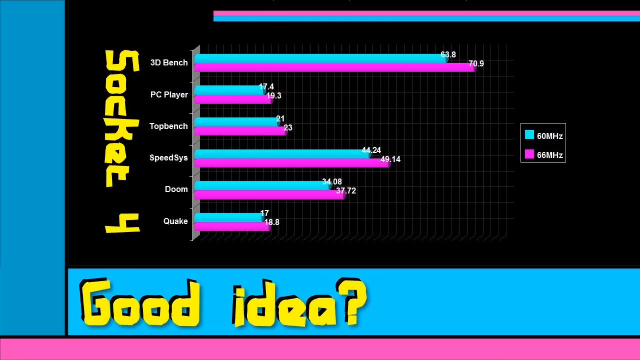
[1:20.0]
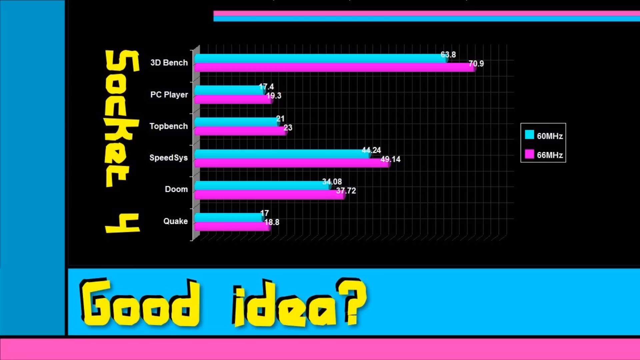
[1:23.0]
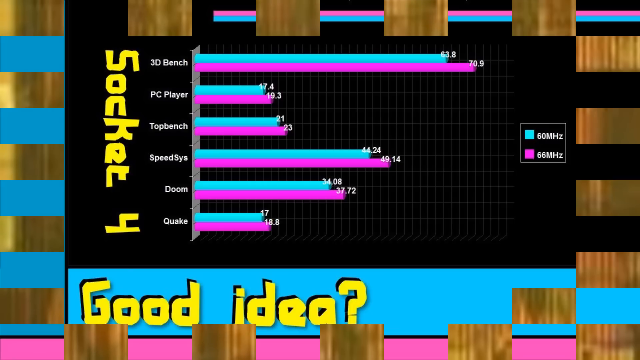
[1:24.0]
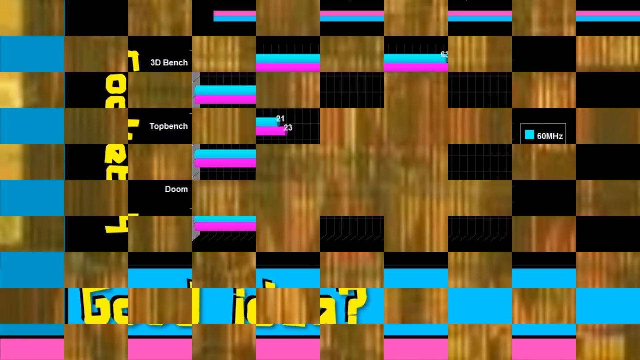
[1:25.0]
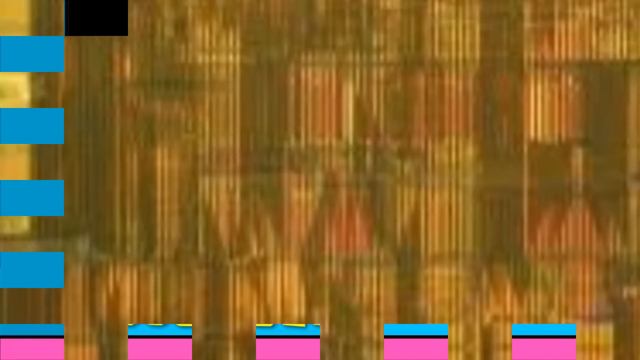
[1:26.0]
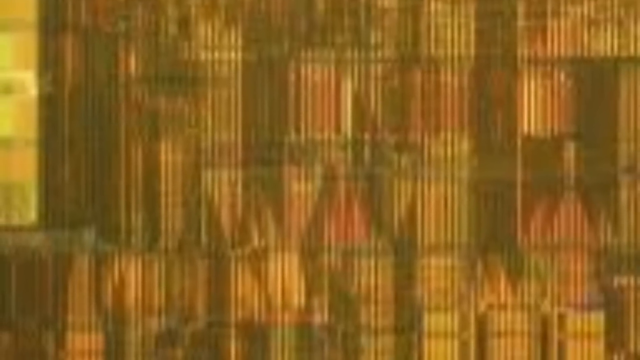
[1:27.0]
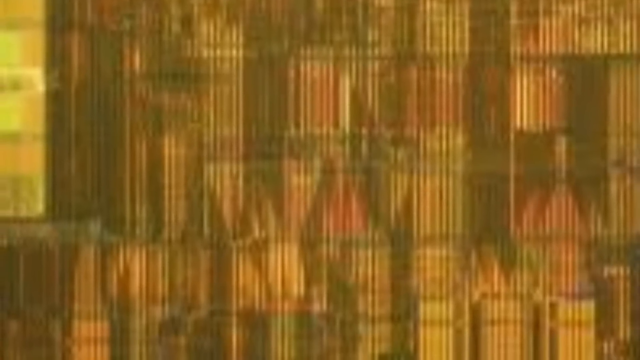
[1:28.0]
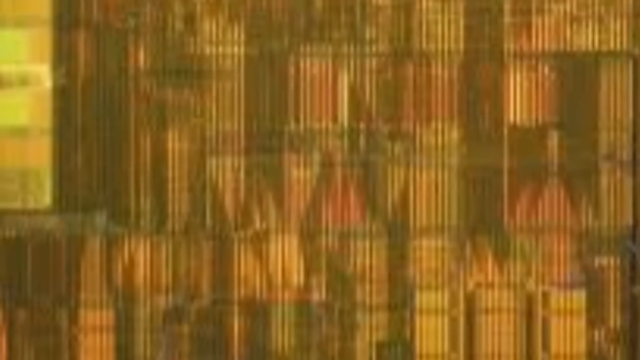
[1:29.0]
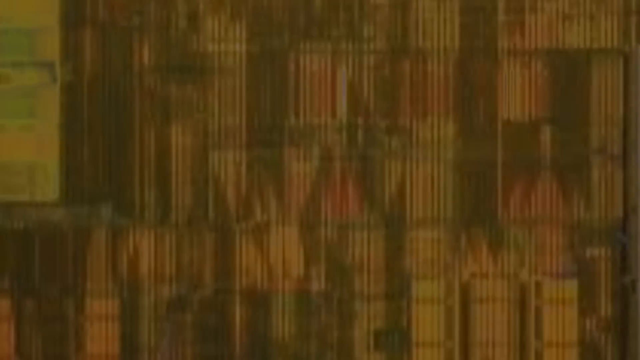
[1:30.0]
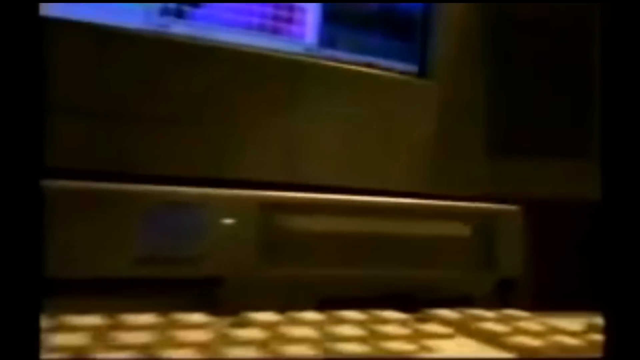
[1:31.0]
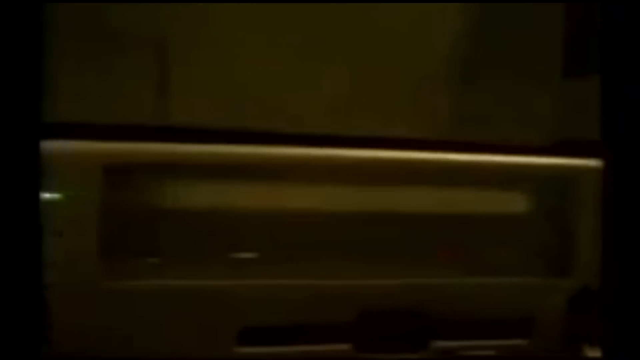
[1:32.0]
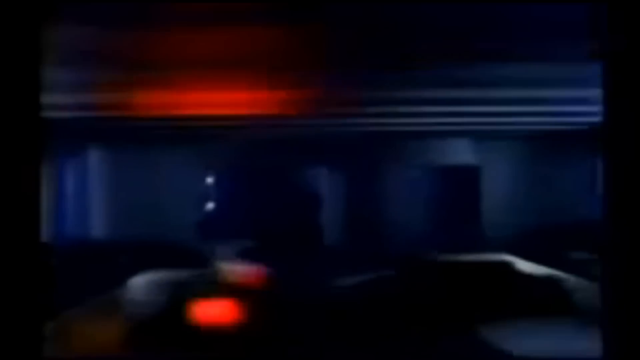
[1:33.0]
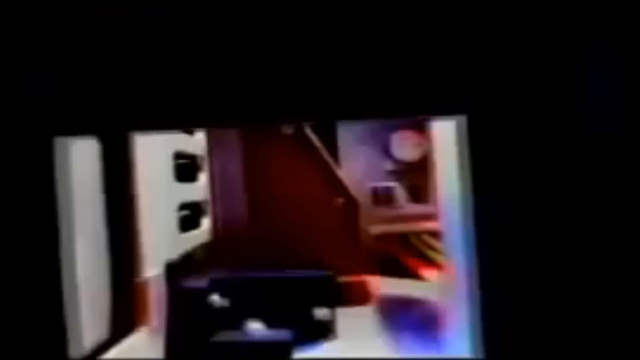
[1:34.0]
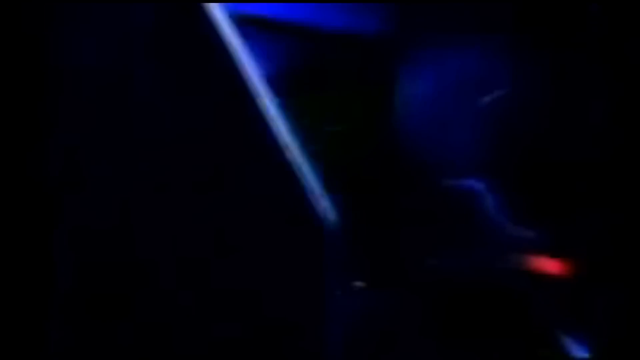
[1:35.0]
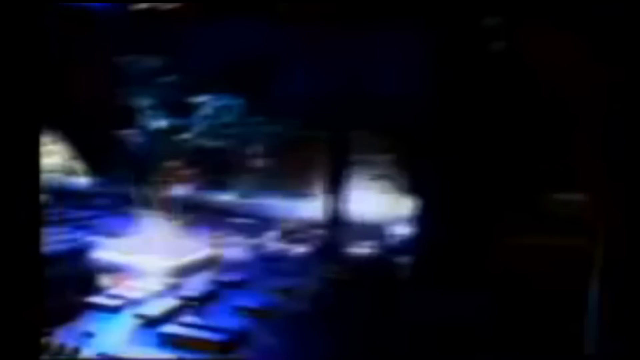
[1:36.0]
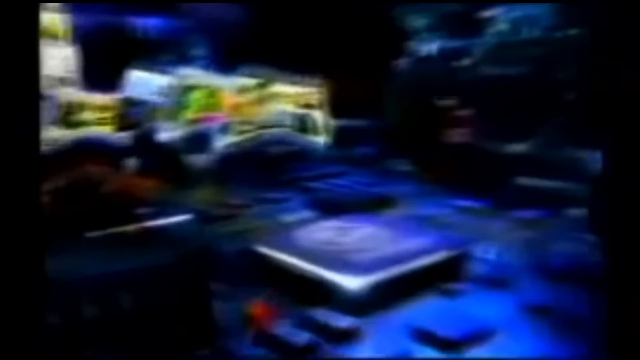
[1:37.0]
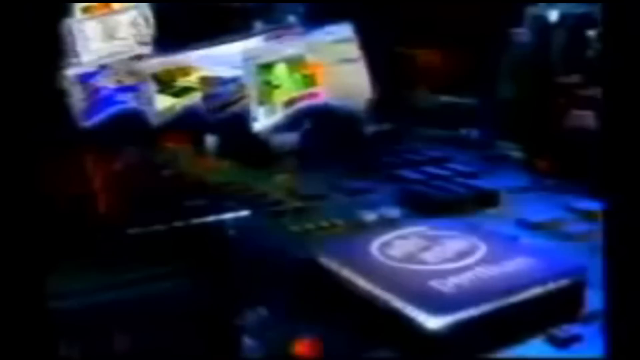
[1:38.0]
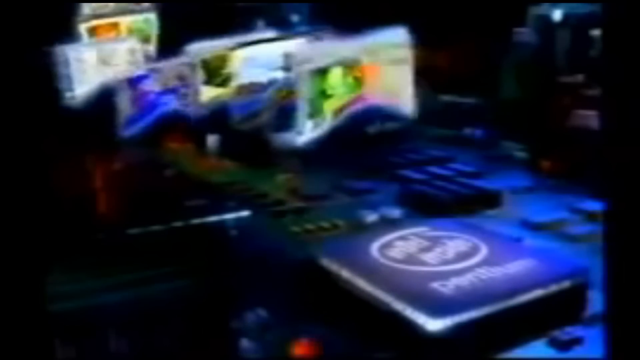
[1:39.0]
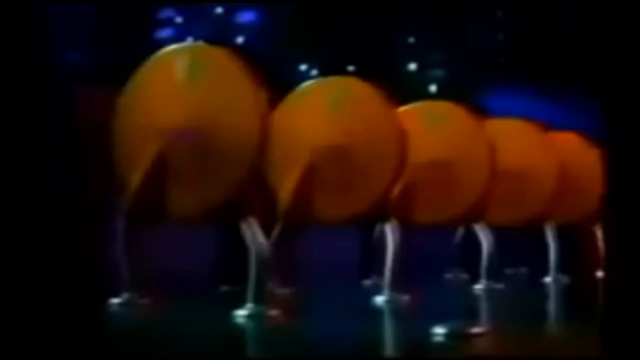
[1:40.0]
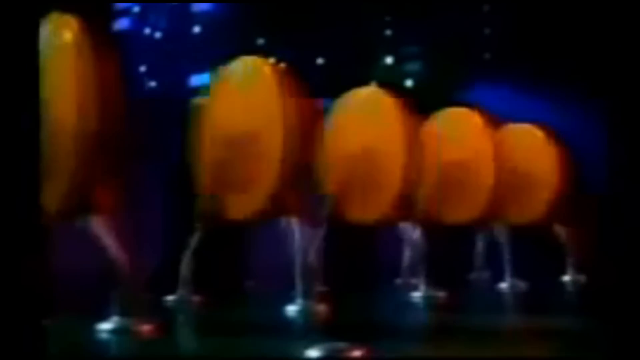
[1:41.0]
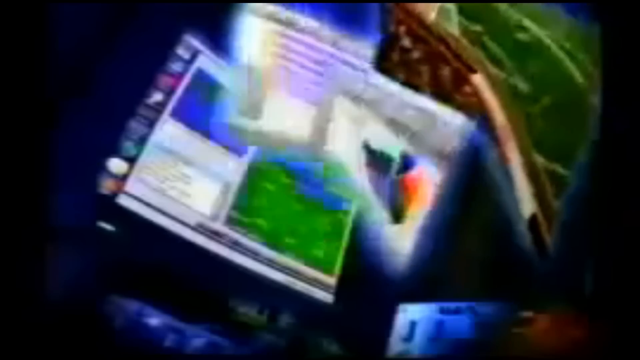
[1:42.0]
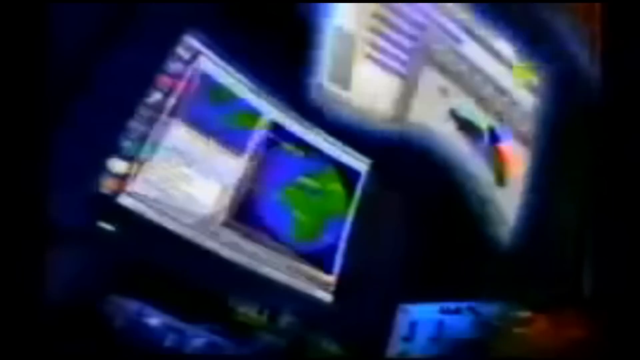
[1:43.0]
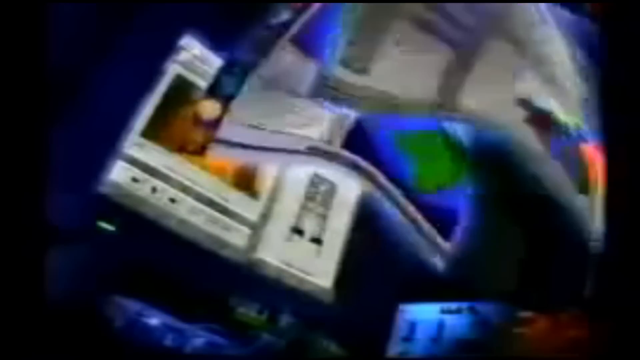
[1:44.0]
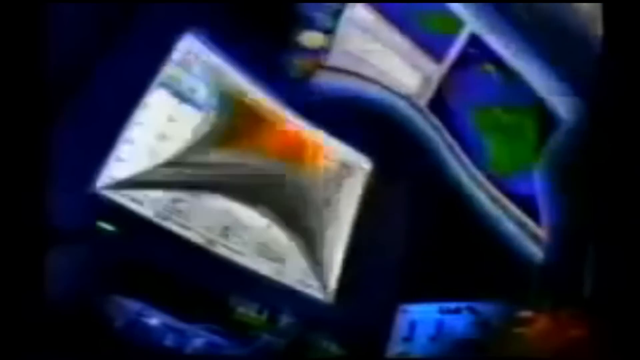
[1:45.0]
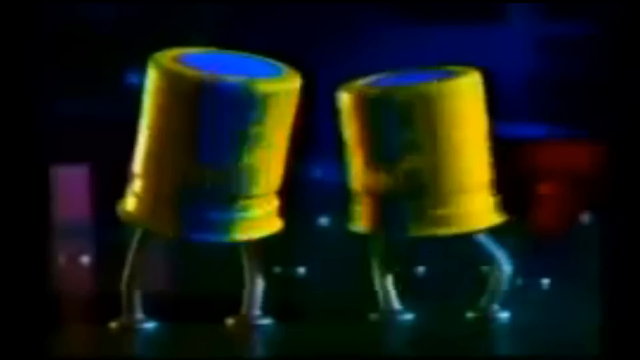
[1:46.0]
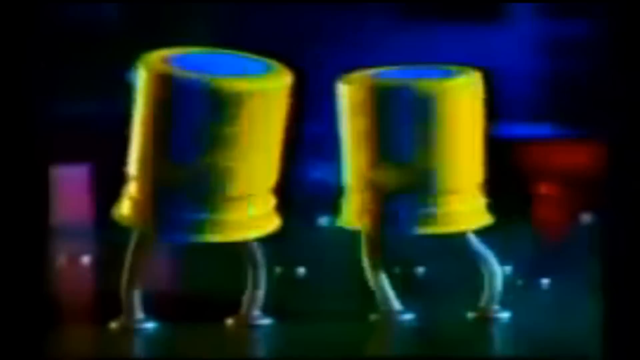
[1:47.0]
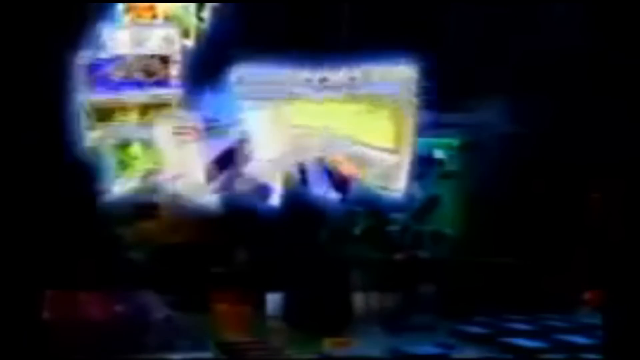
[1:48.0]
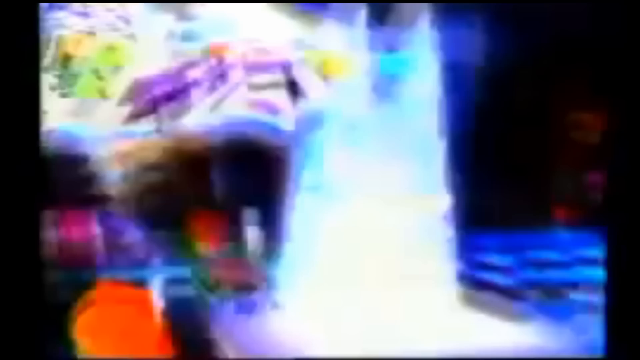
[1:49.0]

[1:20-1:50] A bar graph on a black background says "socket 4 good idea," and along the side are the categories "3D bench PC player top bench speed sis doom and quake." Each category has a turquoise line and a pink line; the turquoise line is labeled "60 MHZ" and the pink line "66 MHZ," showing how far each goes for each category. The scene goes away in a pixelated fashion, returning to the bookcase scene, where an old computer is shown at the spot where a floppy disk goes. The view goes in as if looking inside, showing all sorts of computer chips and parts. A bunch of papers walk into the processor, orange circles with white legs dance, and more of what looks like website screens coming off the computer sort of dance as well. Yellow cylinders with silver legs bobble up and down.